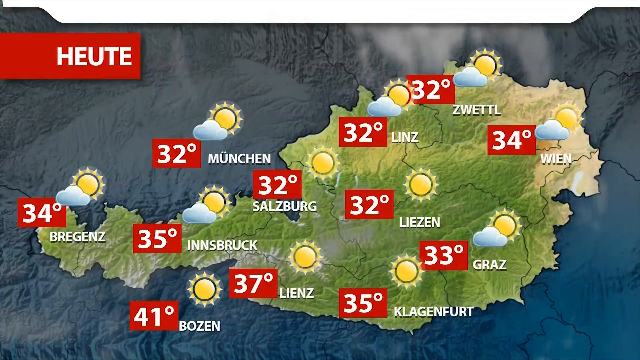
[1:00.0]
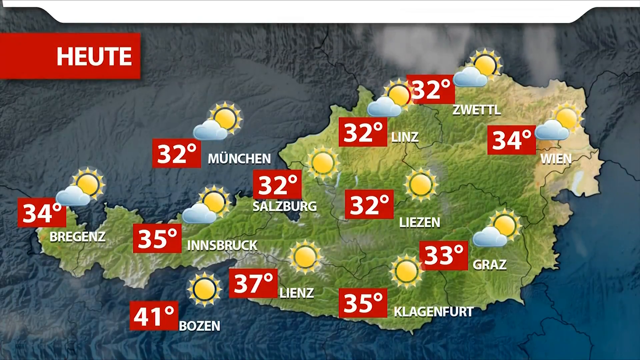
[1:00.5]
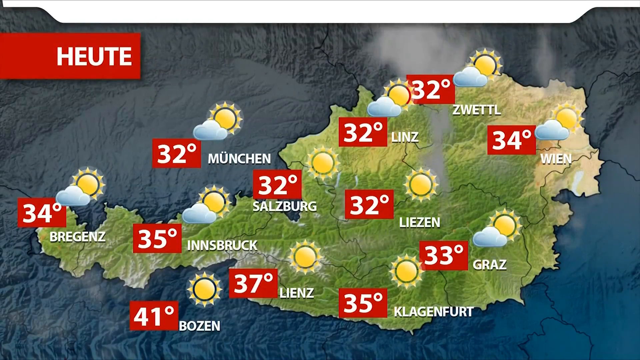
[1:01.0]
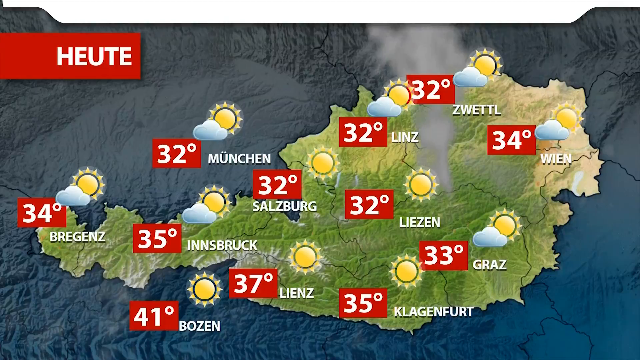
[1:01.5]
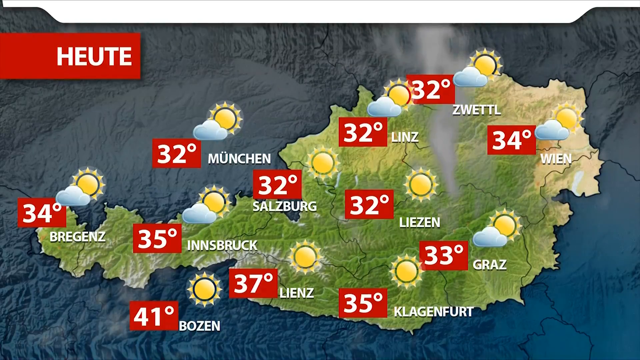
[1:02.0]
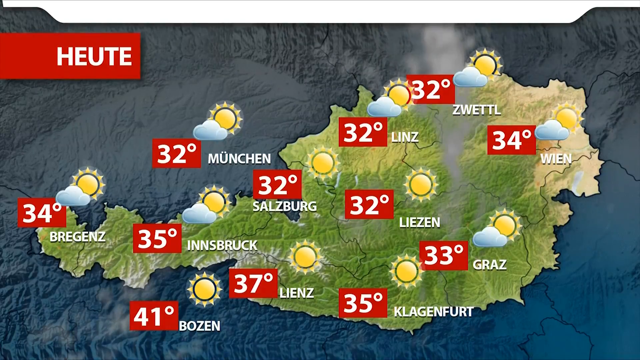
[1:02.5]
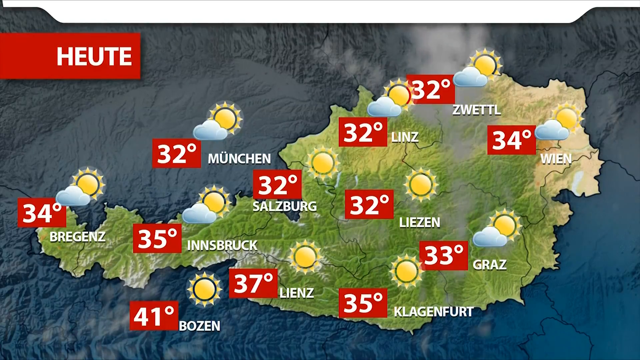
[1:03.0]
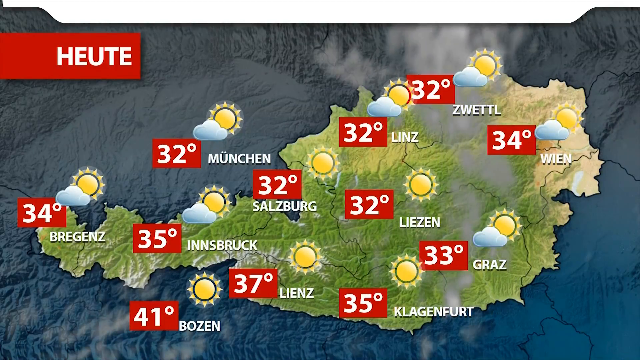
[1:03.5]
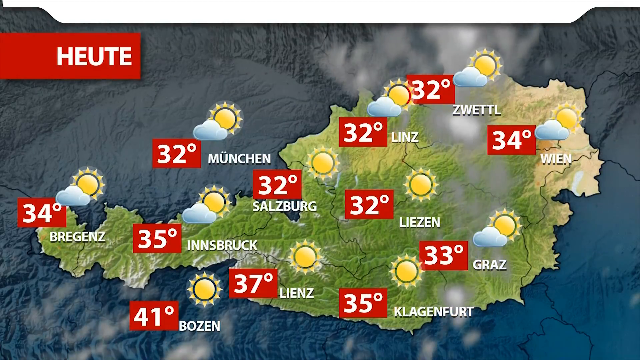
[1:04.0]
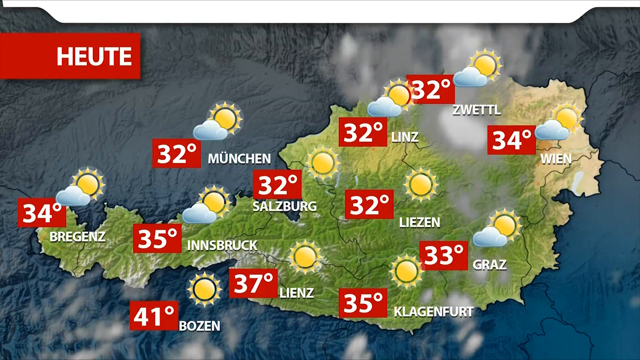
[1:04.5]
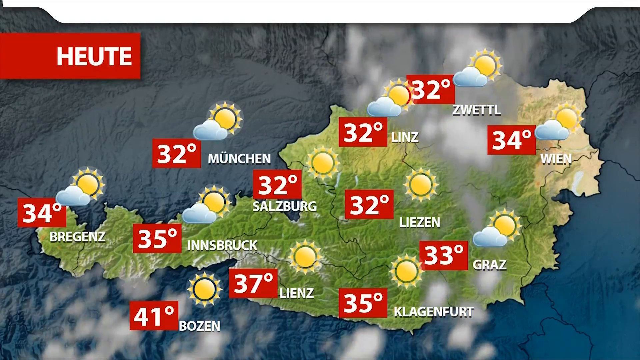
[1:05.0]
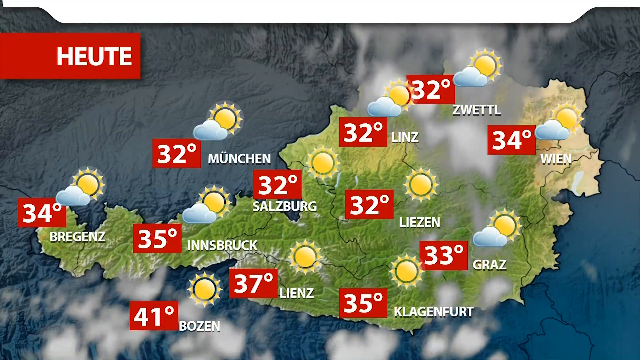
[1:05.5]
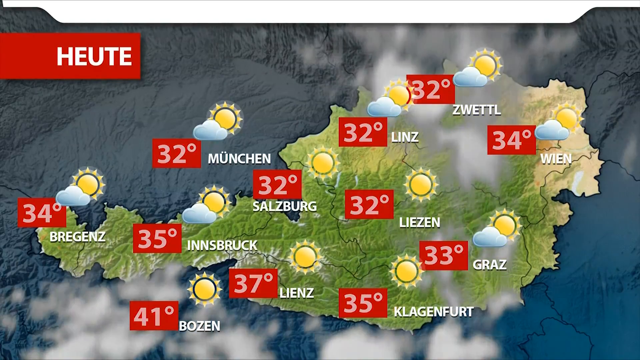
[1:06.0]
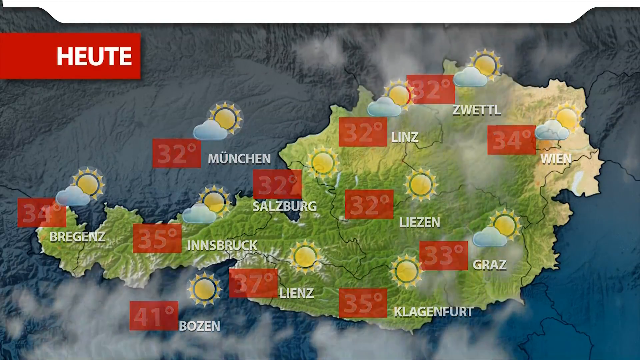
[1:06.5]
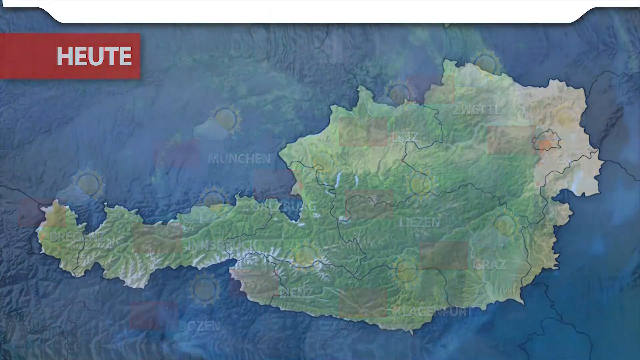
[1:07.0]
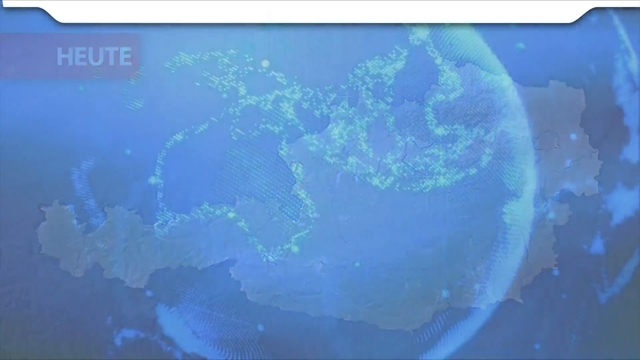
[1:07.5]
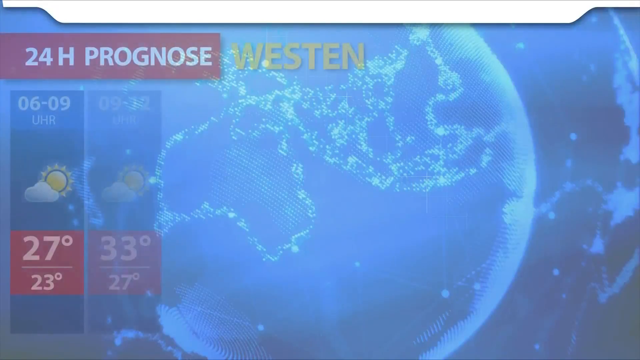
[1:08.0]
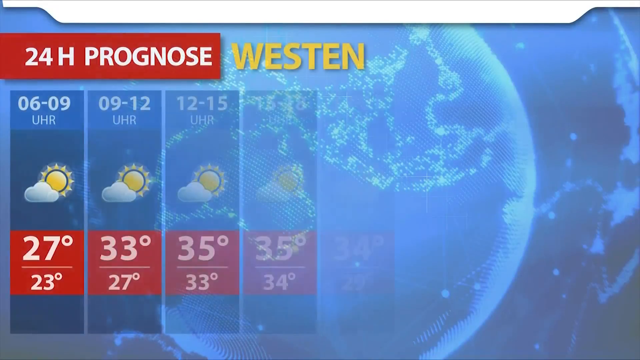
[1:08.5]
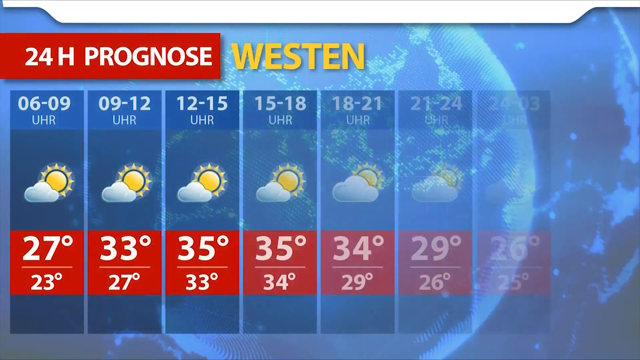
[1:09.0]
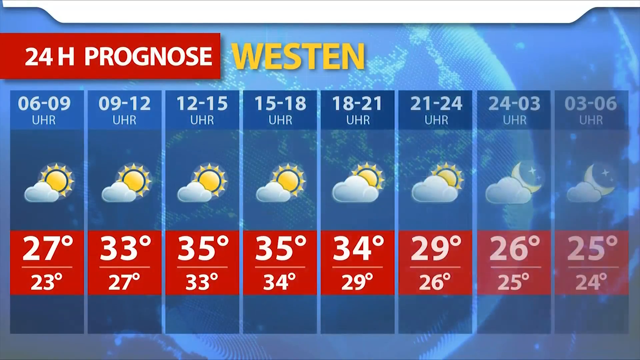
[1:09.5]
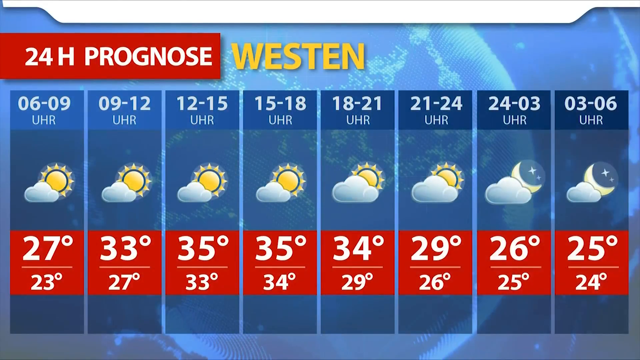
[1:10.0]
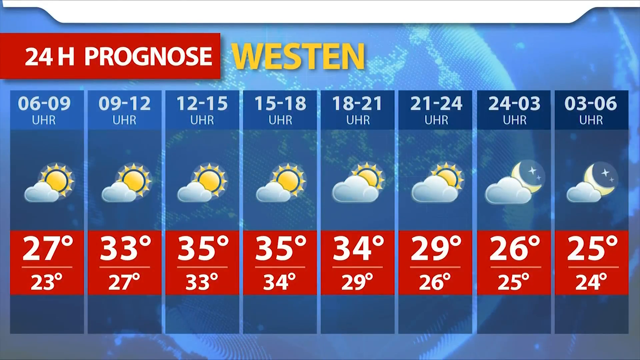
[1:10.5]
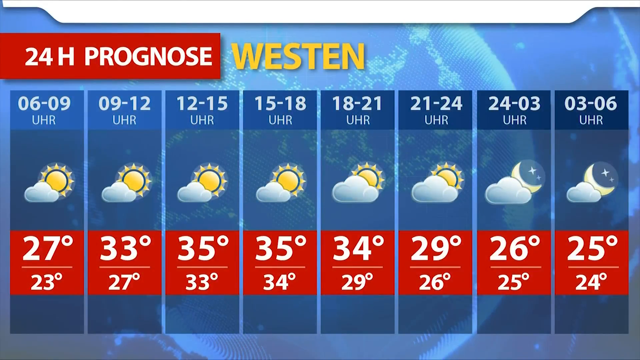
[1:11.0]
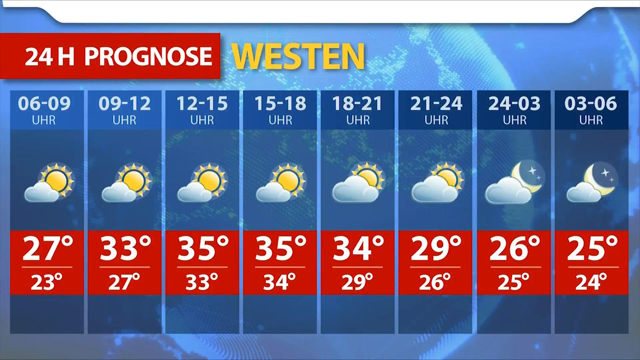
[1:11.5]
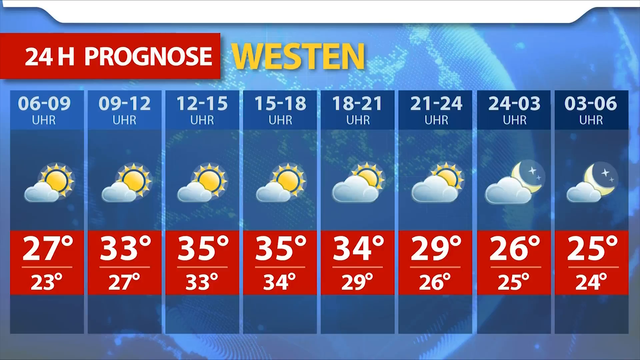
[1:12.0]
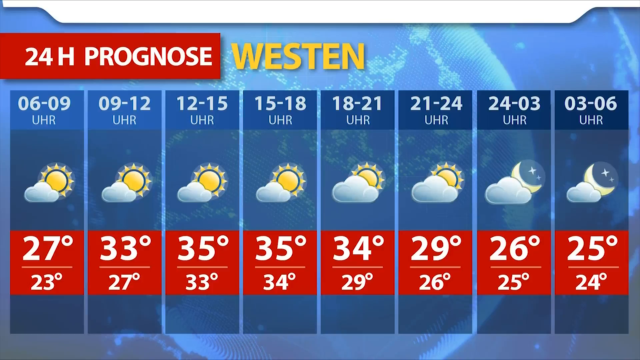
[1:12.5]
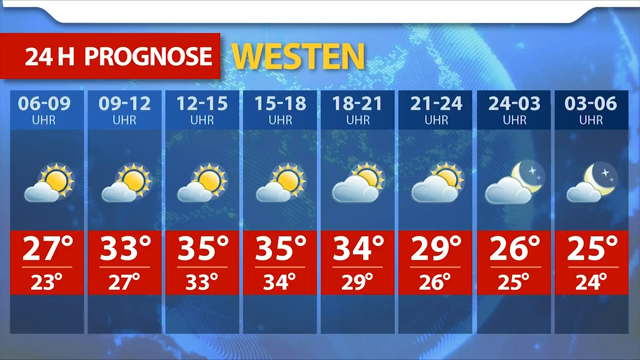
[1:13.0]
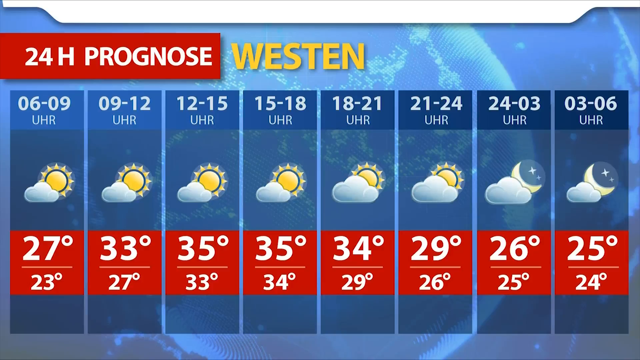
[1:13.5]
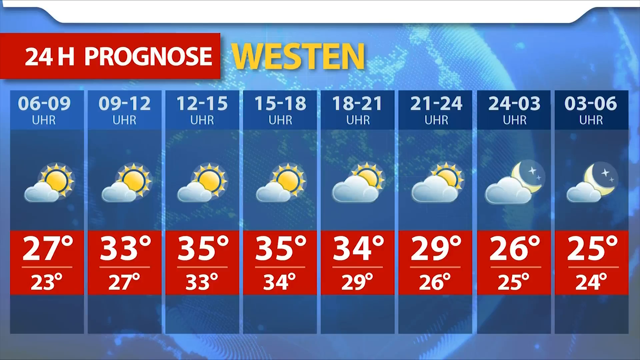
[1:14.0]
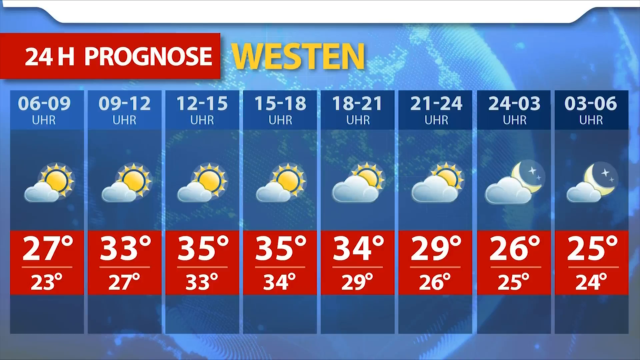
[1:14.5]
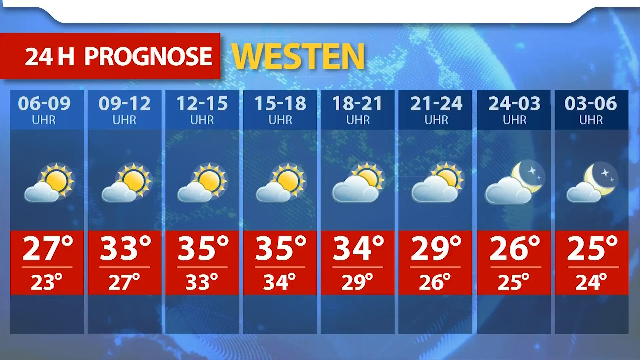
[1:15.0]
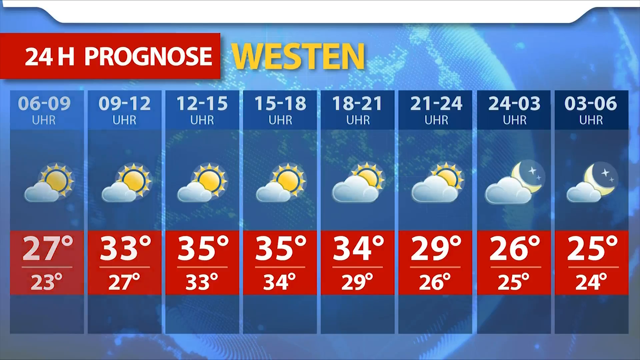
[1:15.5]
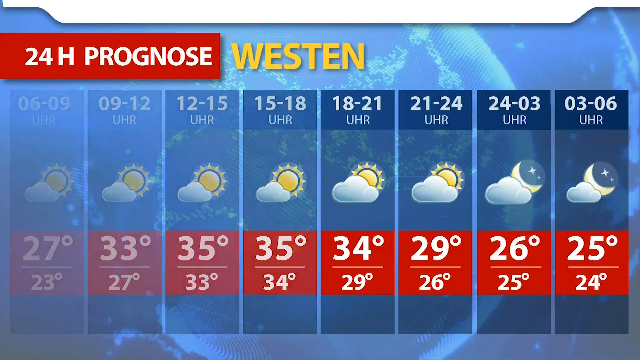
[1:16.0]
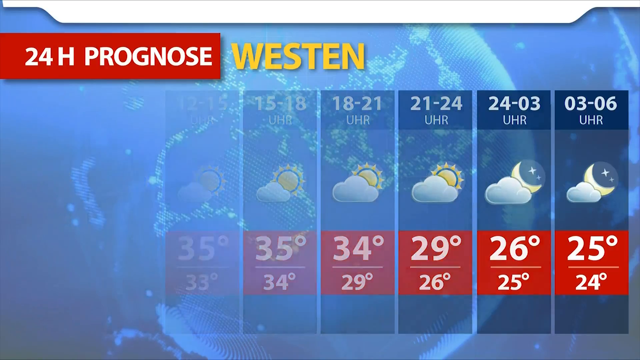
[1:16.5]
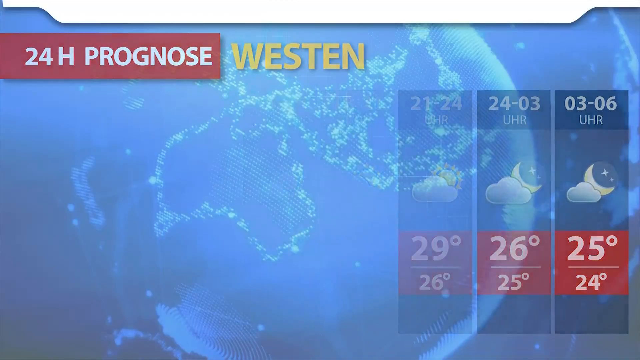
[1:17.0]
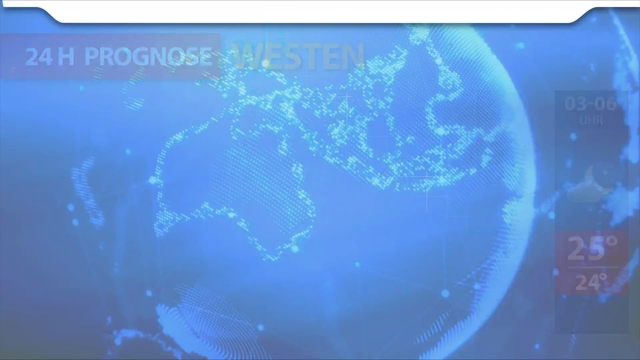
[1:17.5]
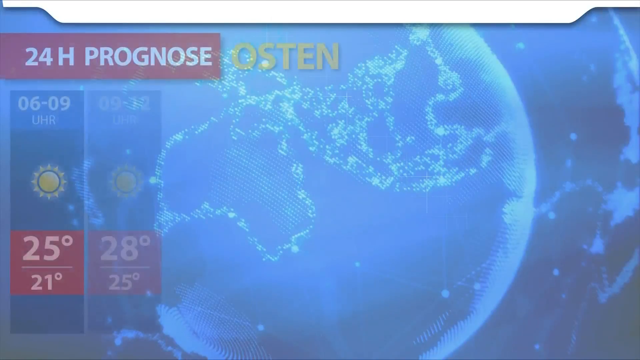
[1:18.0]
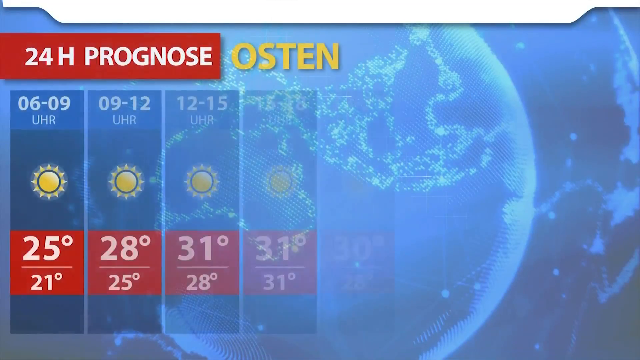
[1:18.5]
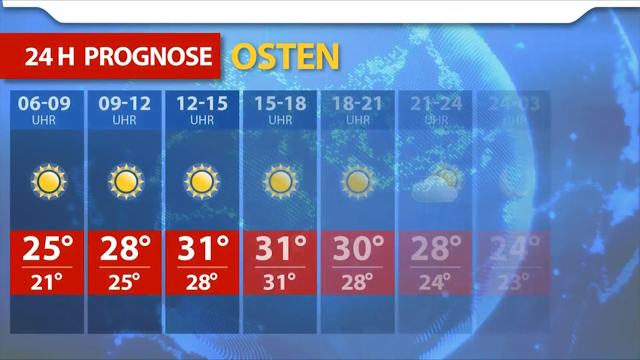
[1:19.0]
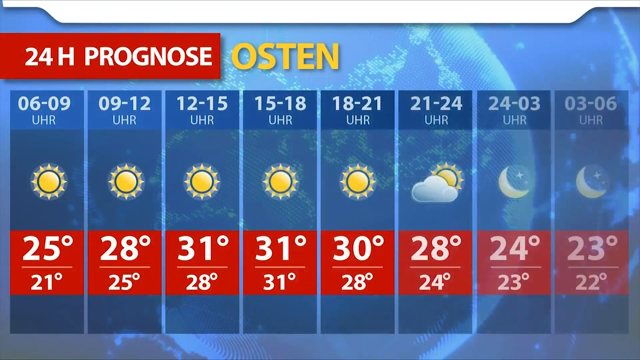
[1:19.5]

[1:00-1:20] The map shows Wien, Linz, Salzburg, Innsbruck and Munich, with illustrations of suns and clouds: some areas have both clouds and sun, others only sun. The focus stays on this map. The setting then changes to a view focused on one specific place, with temperature records and illustrations of sun and clouds, and for the night, illustrations of the moon and clouds. Another area, Austin, is also displayed, with a table of its weather conditions.